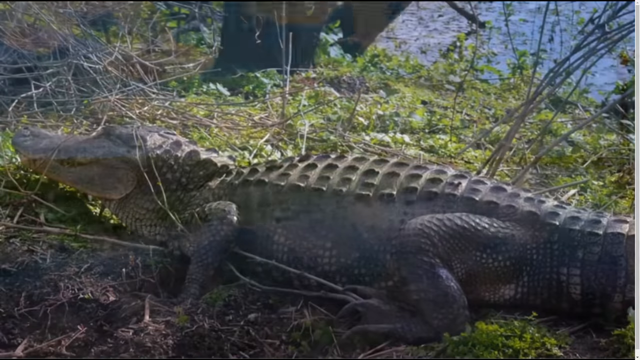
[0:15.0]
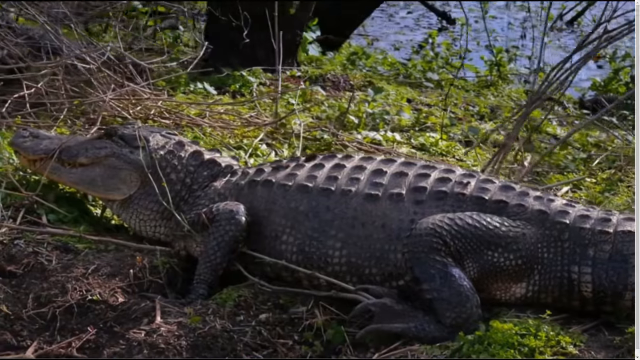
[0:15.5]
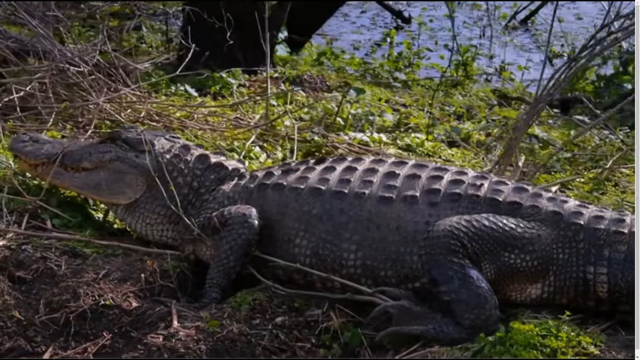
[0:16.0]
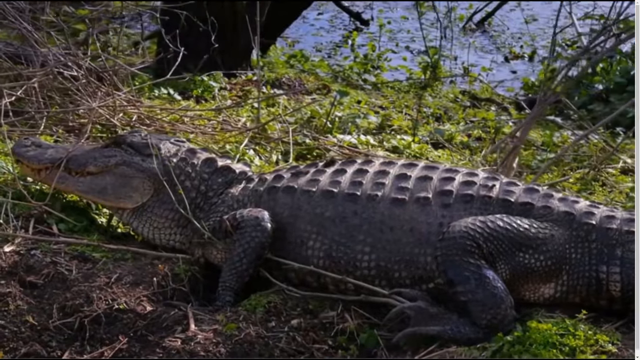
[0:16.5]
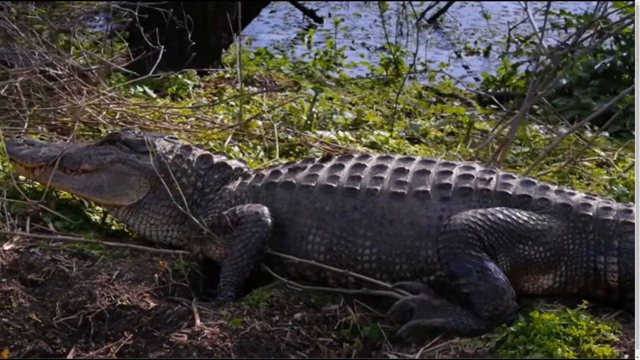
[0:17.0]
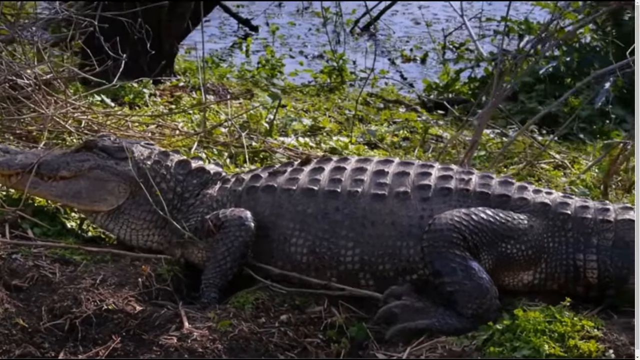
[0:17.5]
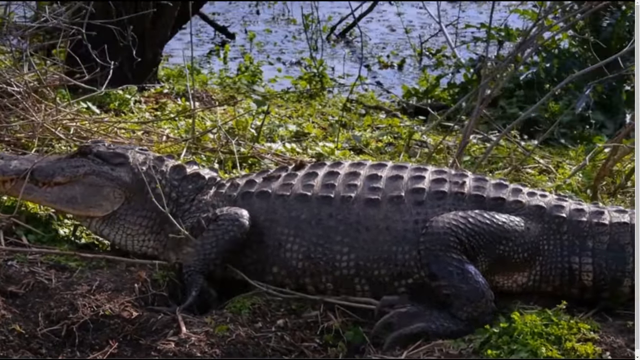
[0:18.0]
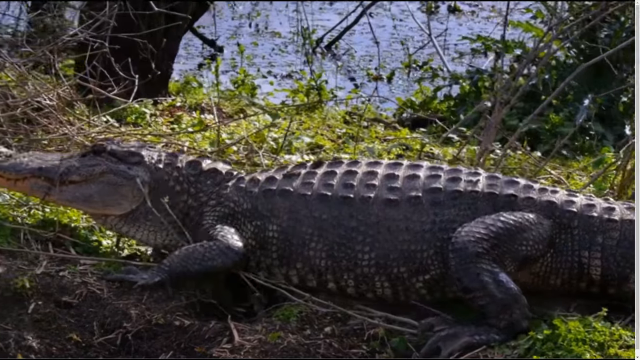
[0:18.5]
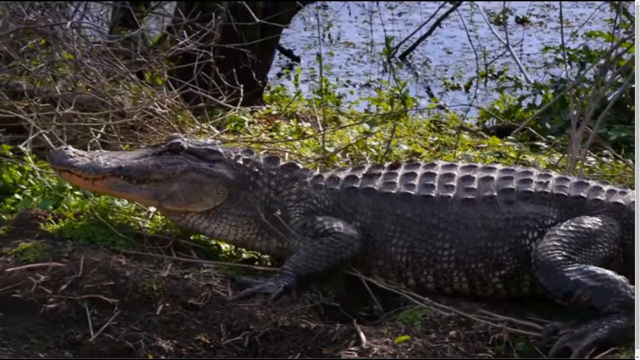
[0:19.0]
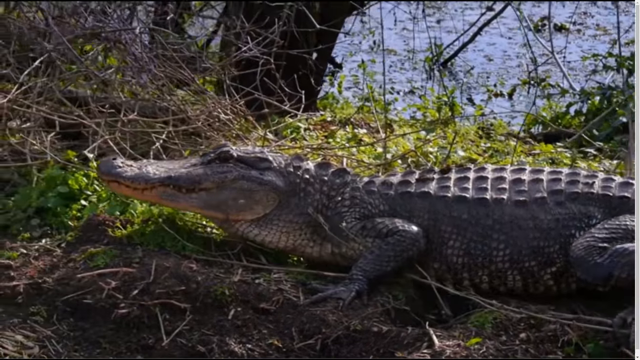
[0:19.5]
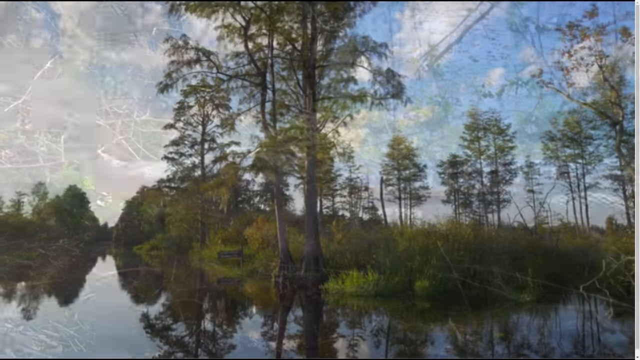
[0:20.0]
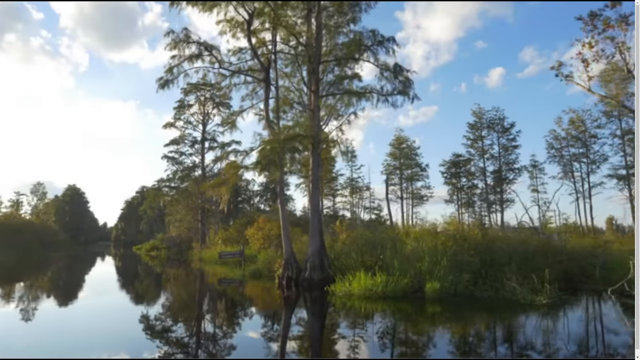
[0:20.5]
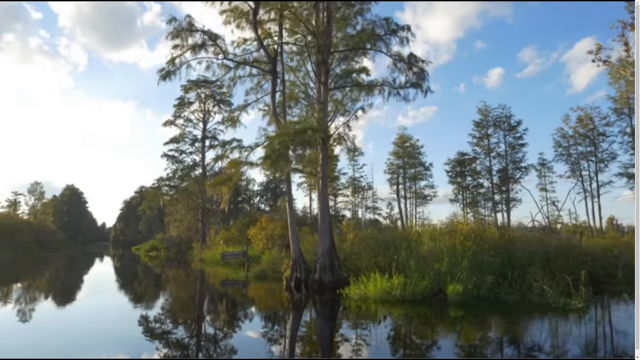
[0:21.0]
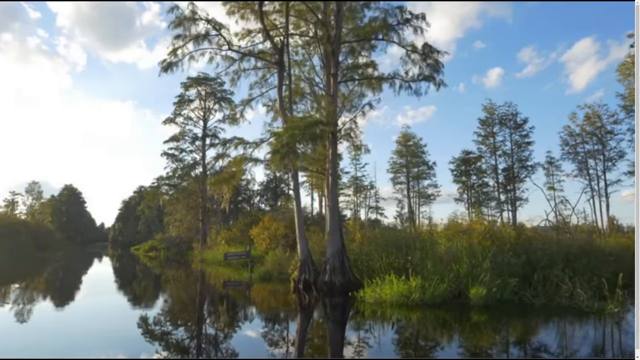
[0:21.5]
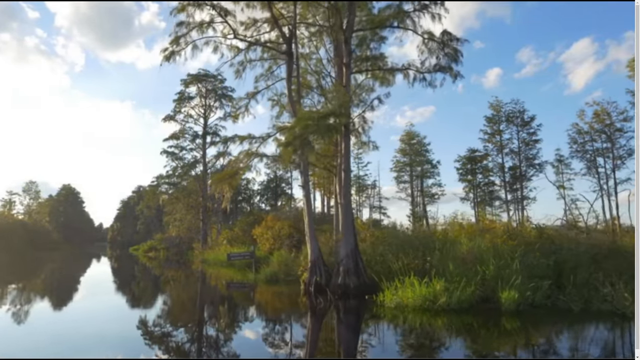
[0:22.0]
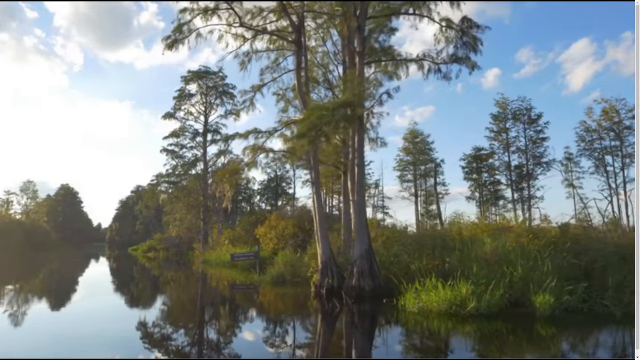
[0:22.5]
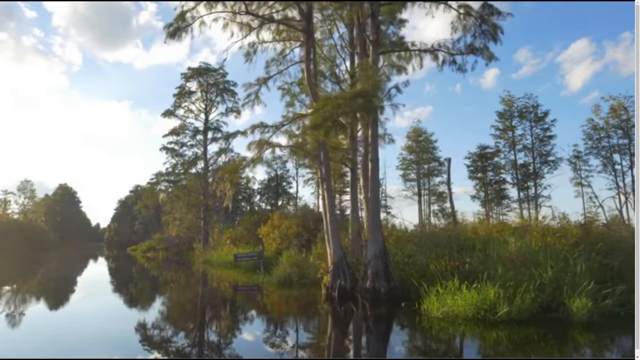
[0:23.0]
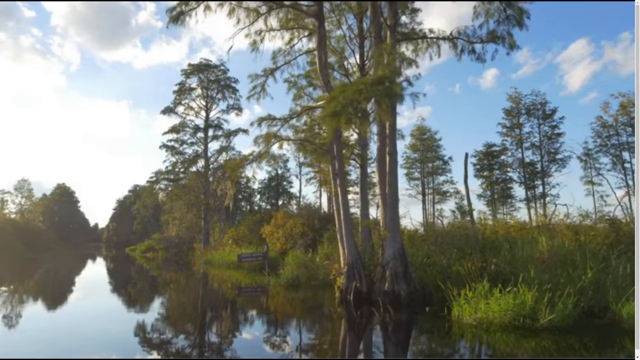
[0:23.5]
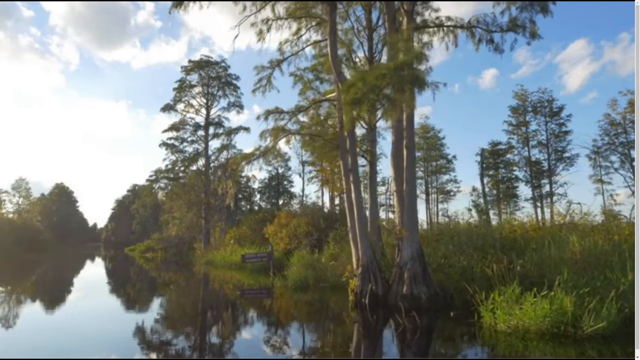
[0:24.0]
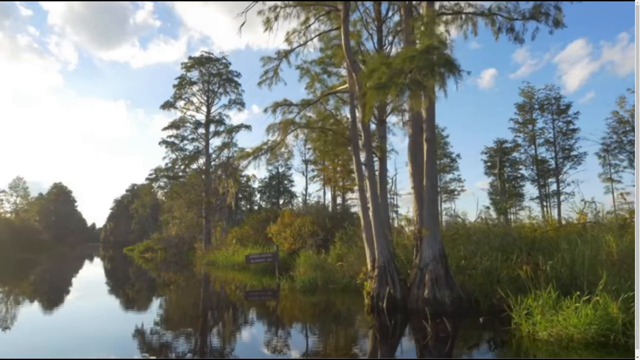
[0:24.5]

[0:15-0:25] An alligator is shown zoomed in up close, walking through what appears to be some type of swampland. The ground beneath it is green and the leaves are green. The scene transitions to moving footage of what seems to be someone traveling downstream or downriver, with trees moving past. The sky is blue and white clouds populate it. There is a lot of vegetation in the background, and many of the trees almost seem to be growing out of the water rather than from the ground, since a lot of water is pooled in the area. This is most likely a swamp.